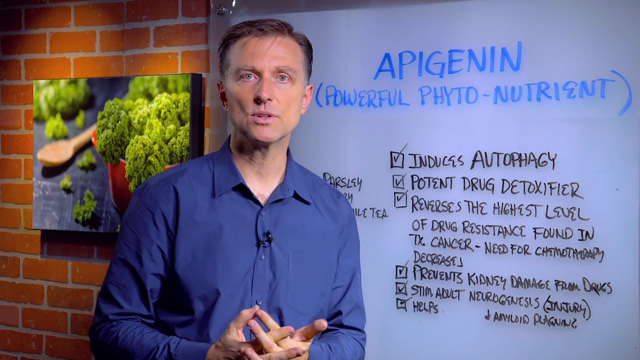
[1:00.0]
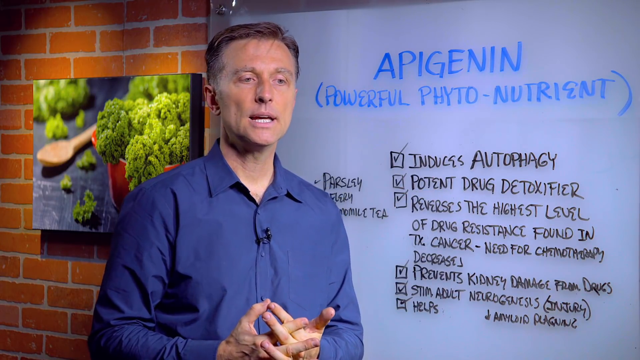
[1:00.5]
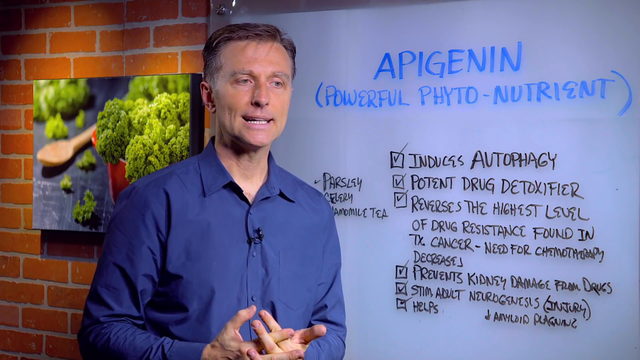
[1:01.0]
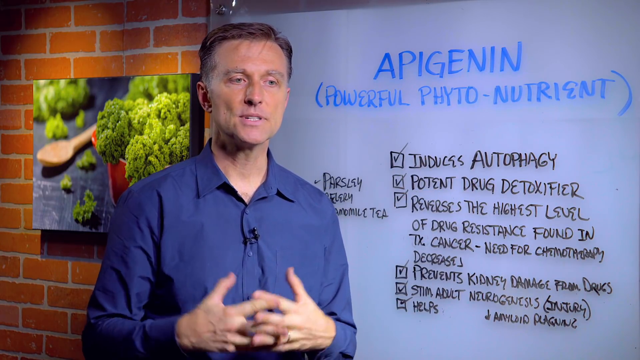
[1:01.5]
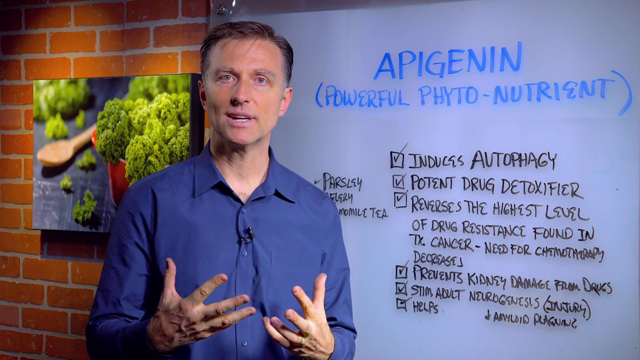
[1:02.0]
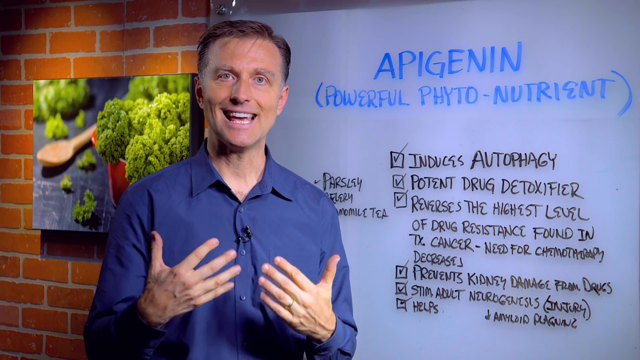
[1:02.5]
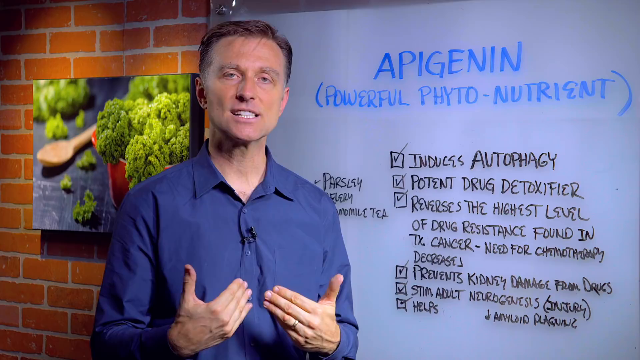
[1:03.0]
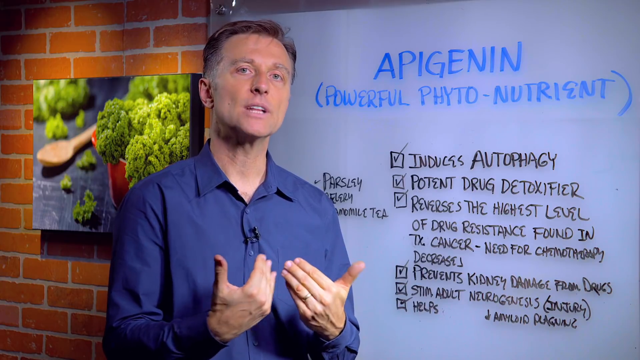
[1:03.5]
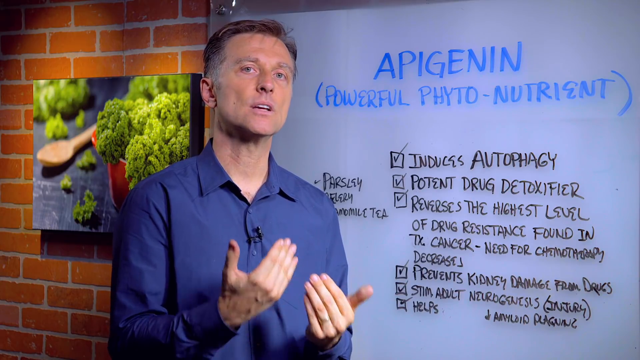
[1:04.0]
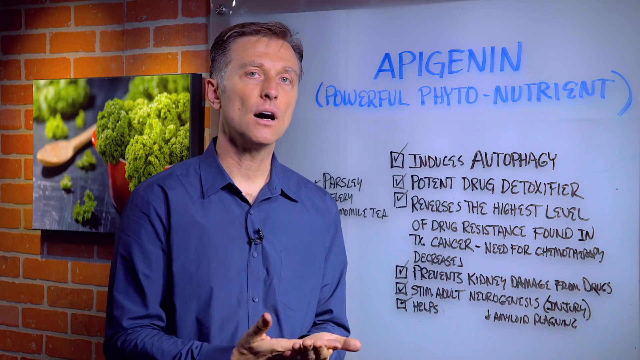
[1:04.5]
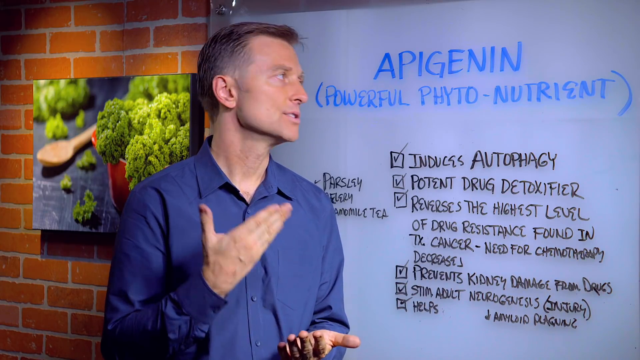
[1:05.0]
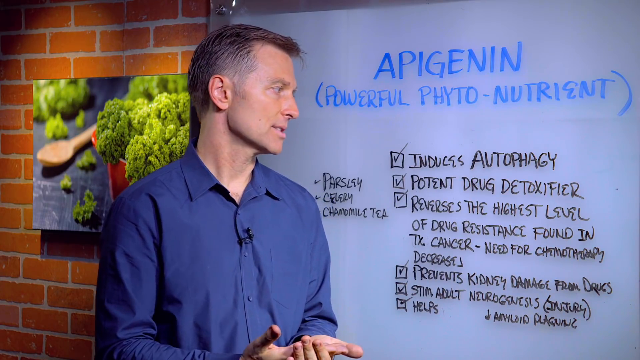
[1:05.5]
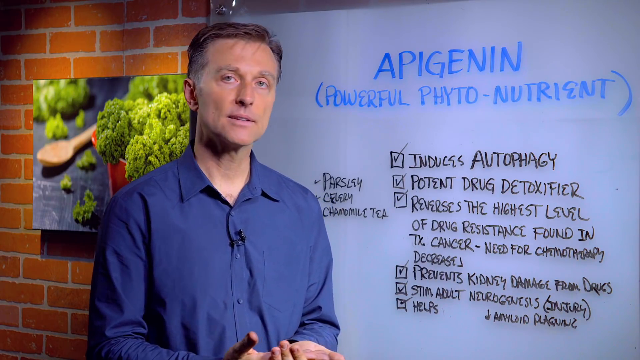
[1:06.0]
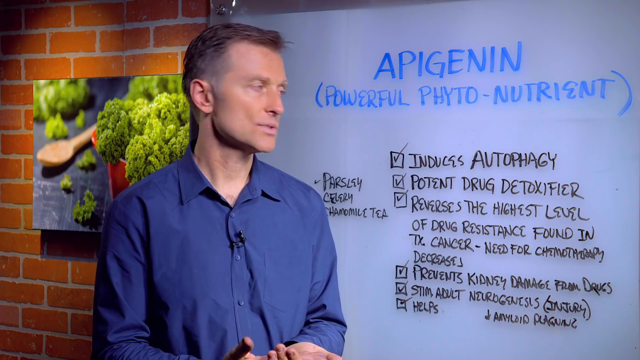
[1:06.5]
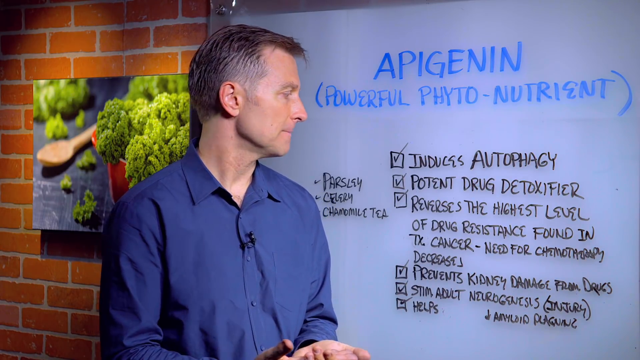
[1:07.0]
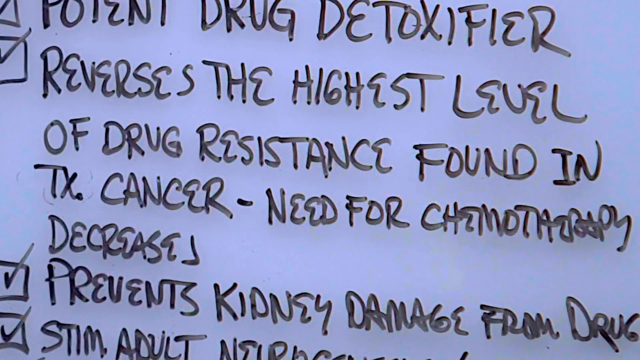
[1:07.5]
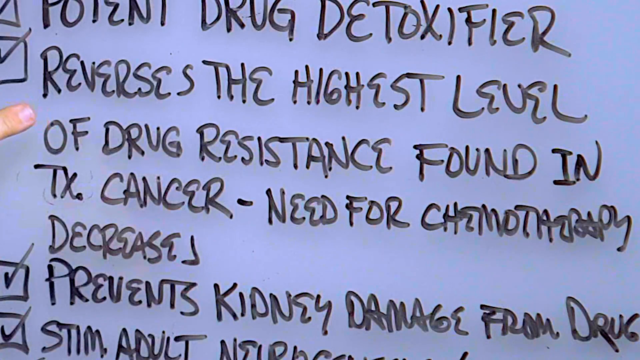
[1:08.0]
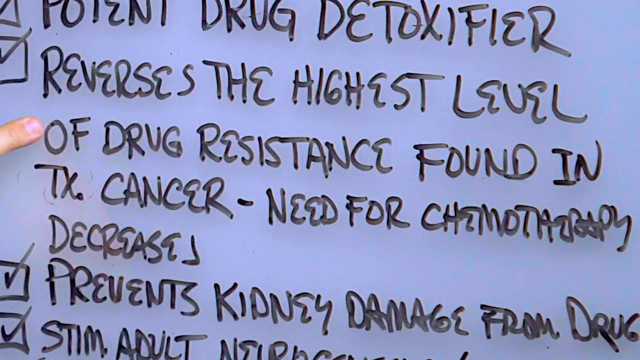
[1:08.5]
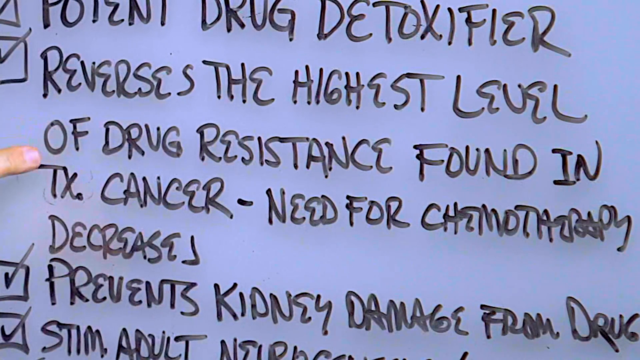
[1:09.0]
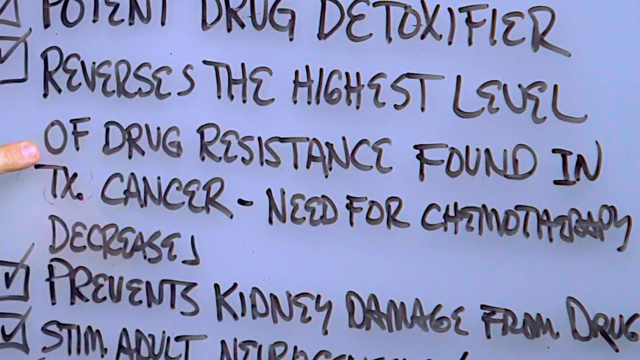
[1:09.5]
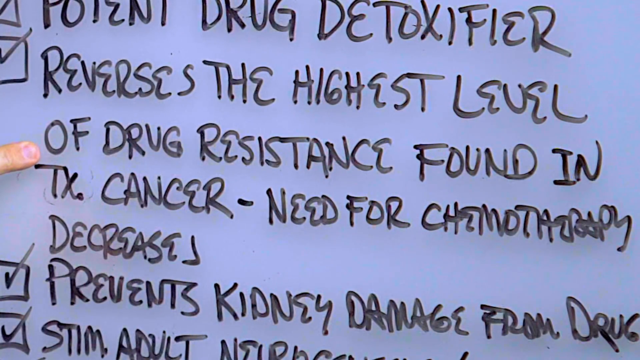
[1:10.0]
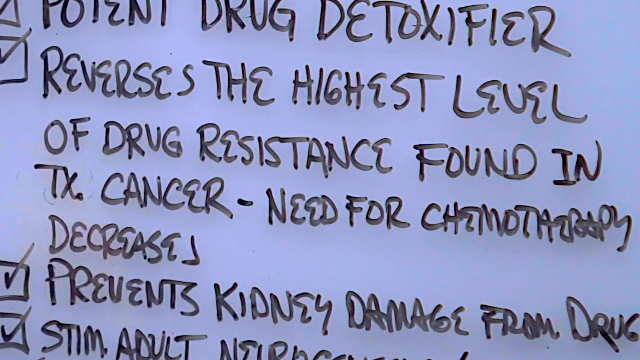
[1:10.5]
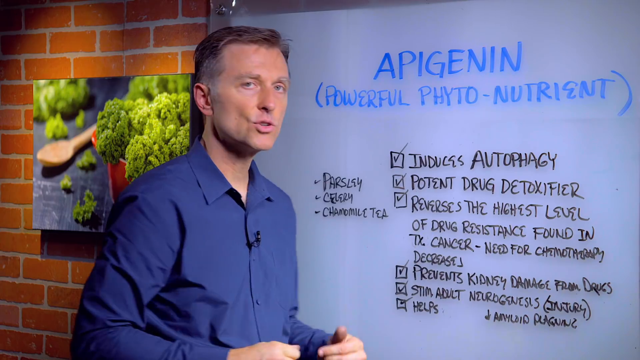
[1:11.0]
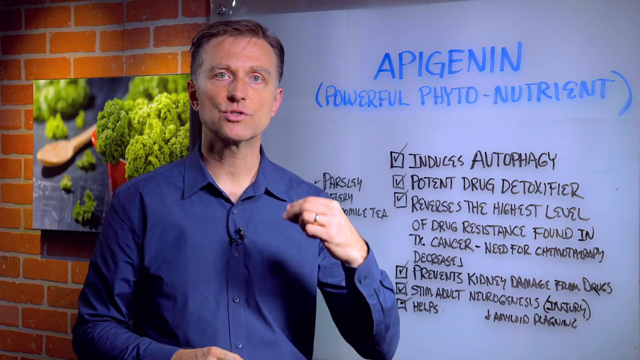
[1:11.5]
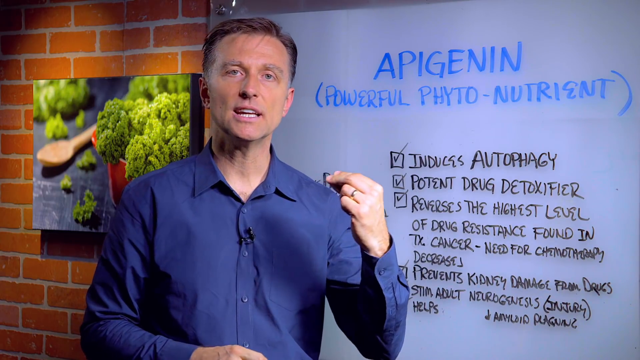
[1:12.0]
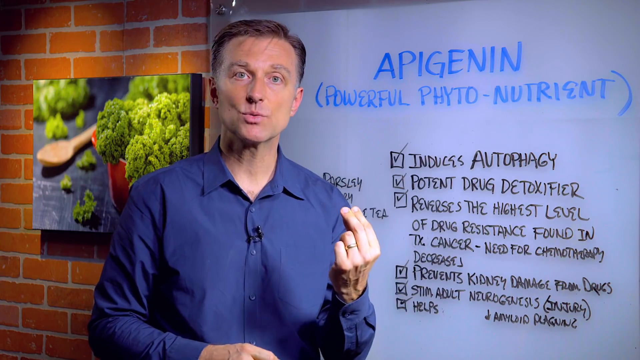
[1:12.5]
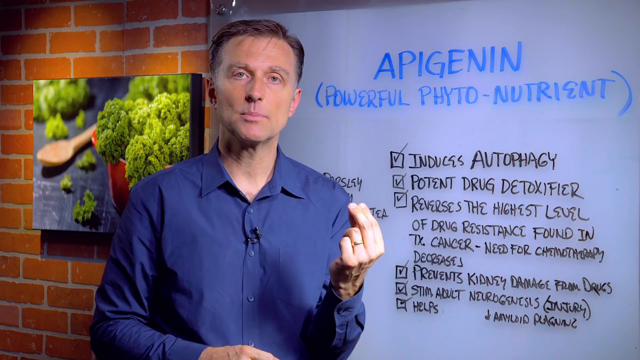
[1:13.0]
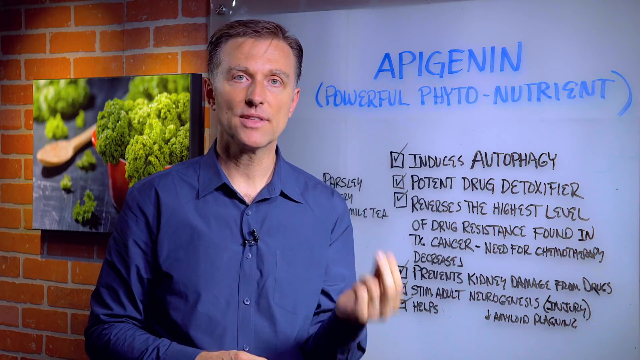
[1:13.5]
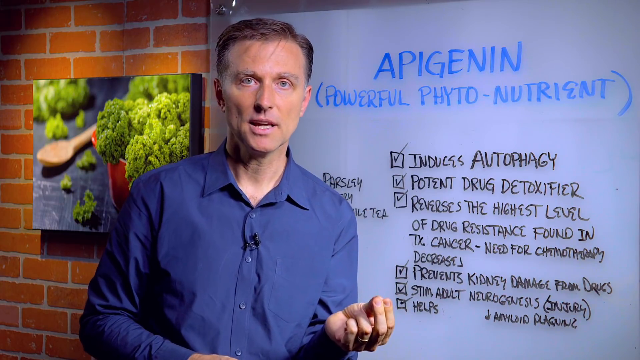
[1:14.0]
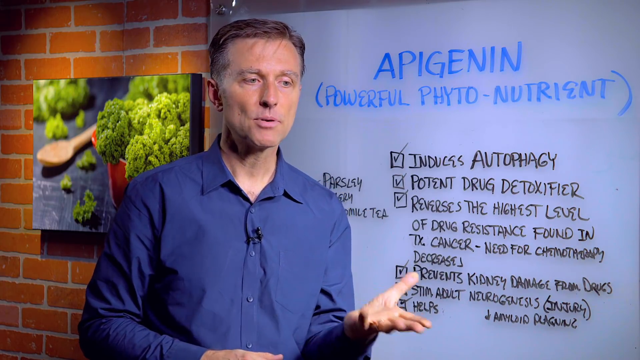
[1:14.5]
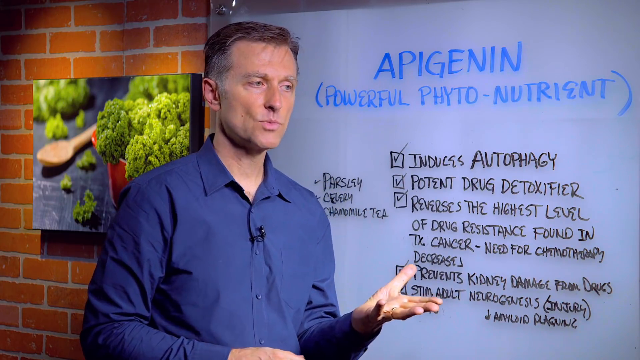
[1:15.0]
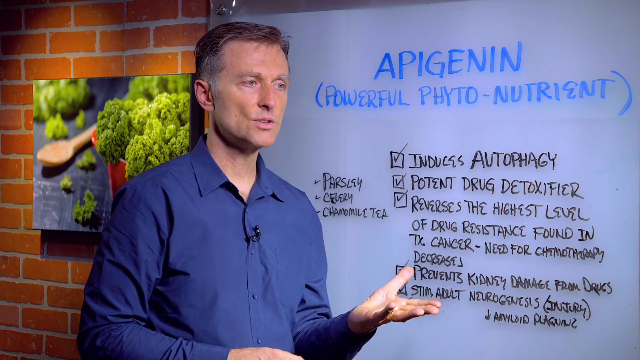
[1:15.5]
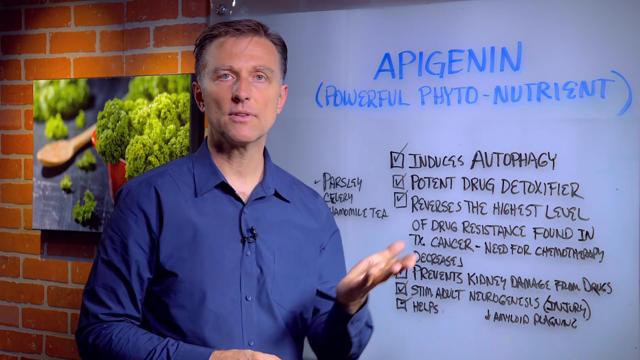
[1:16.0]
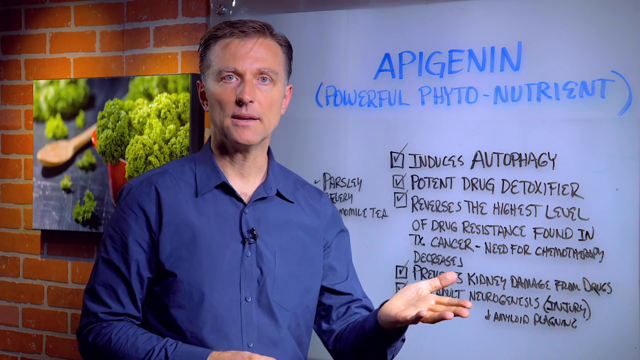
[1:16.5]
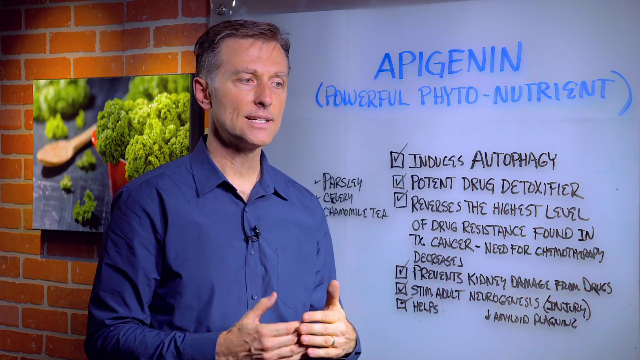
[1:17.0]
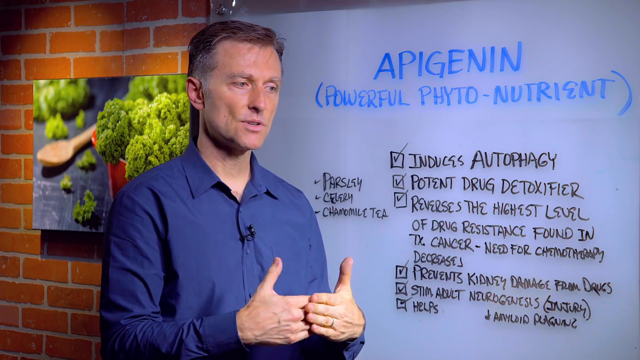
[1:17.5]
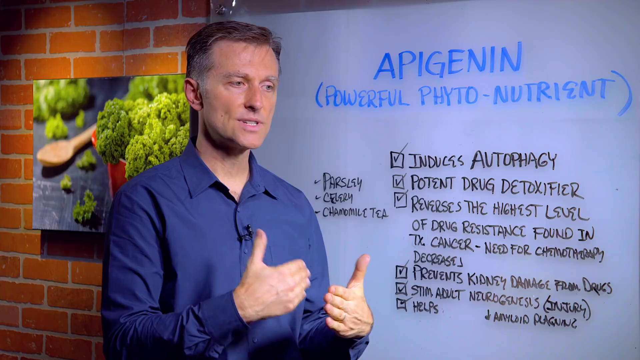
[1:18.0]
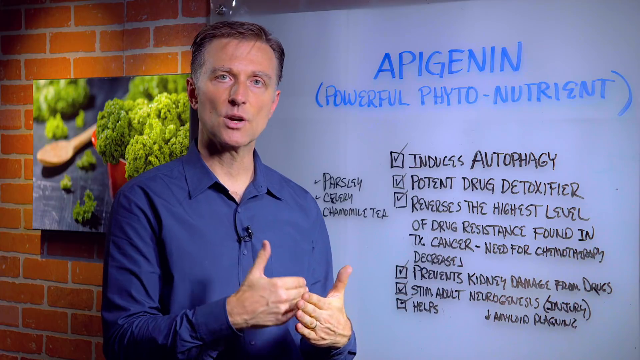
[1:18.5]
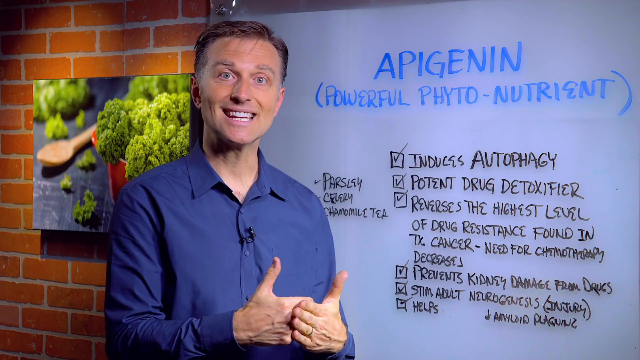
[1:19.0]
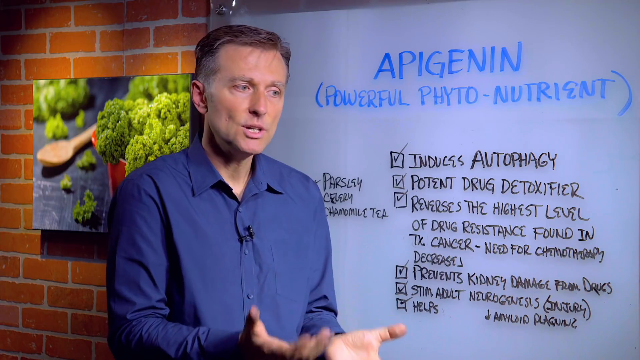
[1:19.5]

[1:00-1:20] The man continues talking about the items on the whiteboard behind him, using his hands; he appears very emotional. He slaps his right hand into his left palm, then uses his left fingers to make a point, and later claps his right hand into his left fingers. At one point the video zooms into the whiteboard again as he points to the point about reversing the highest level of drug resistance and the need for chemotherapy decreasing. The image of broccoli is still on the brick wall in the back to the left.